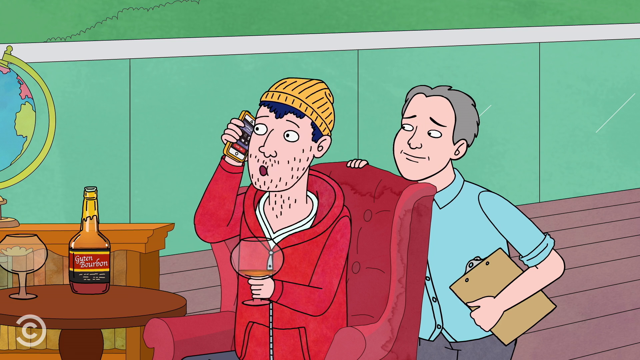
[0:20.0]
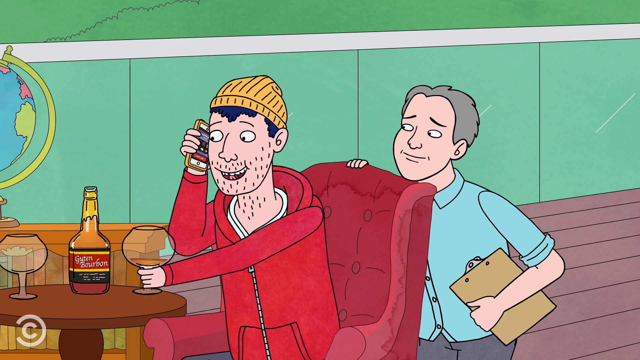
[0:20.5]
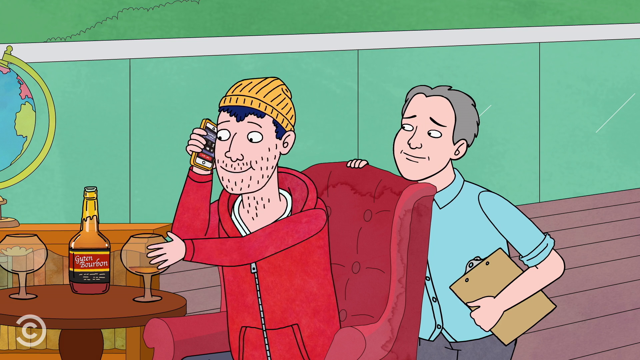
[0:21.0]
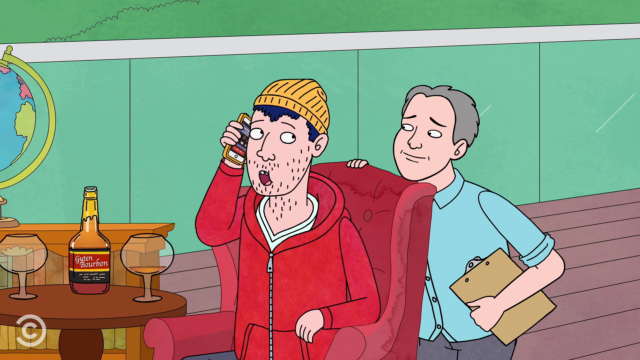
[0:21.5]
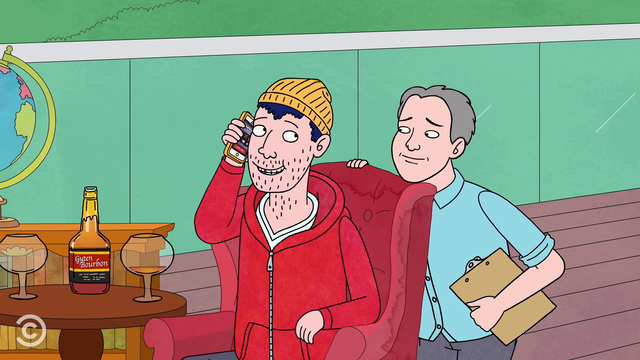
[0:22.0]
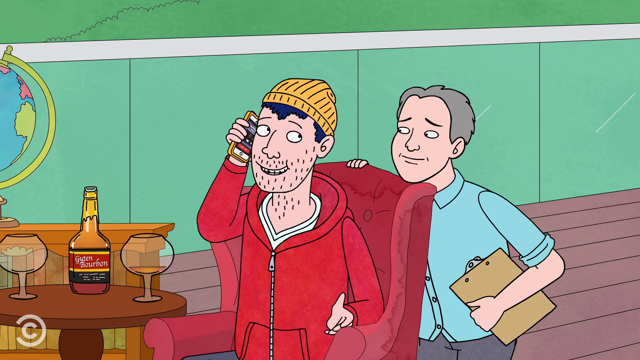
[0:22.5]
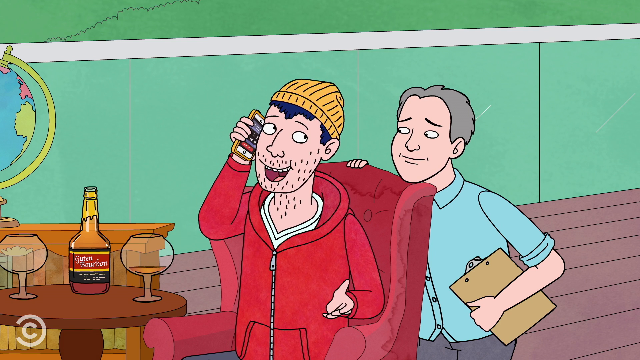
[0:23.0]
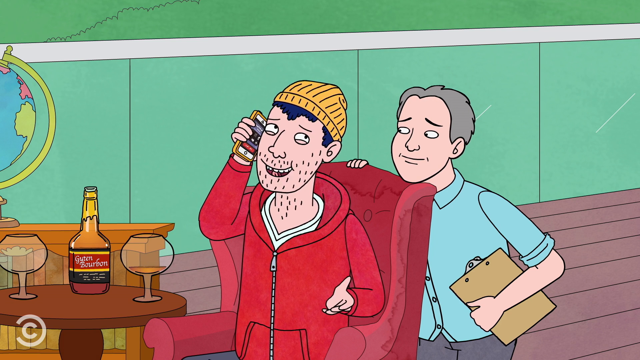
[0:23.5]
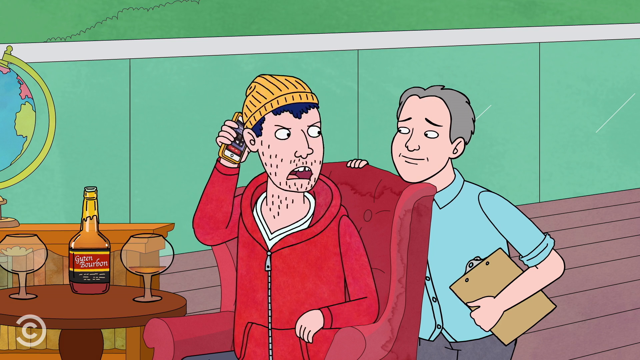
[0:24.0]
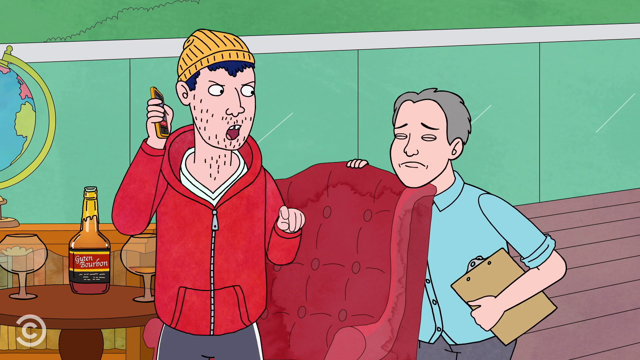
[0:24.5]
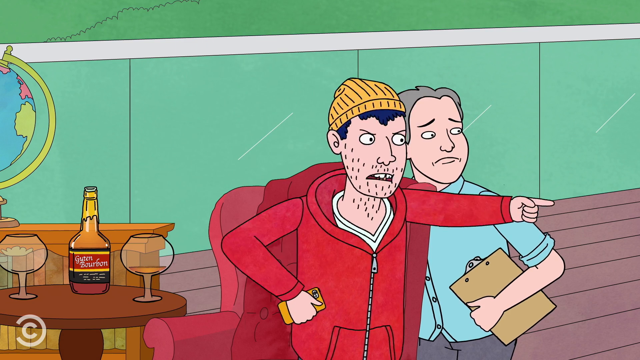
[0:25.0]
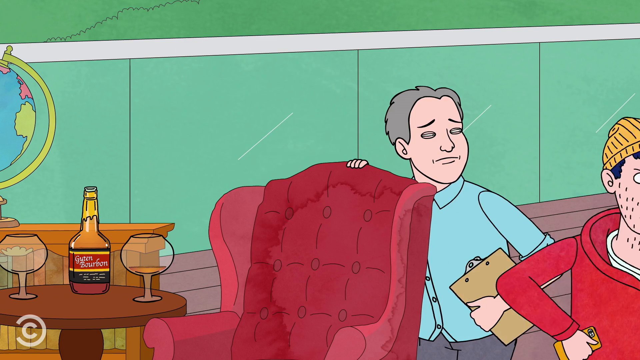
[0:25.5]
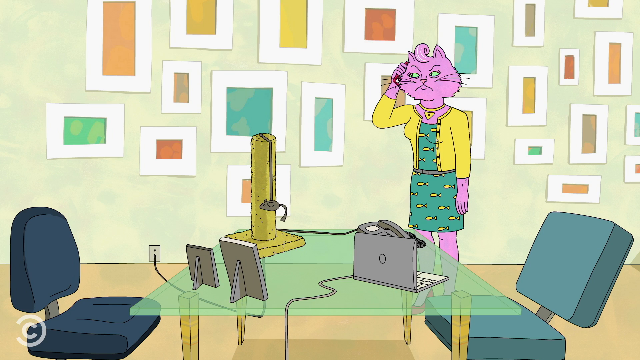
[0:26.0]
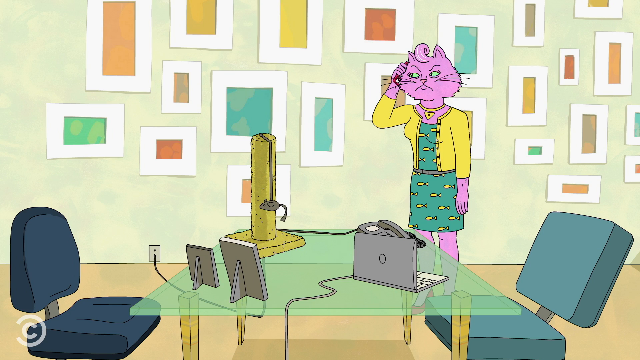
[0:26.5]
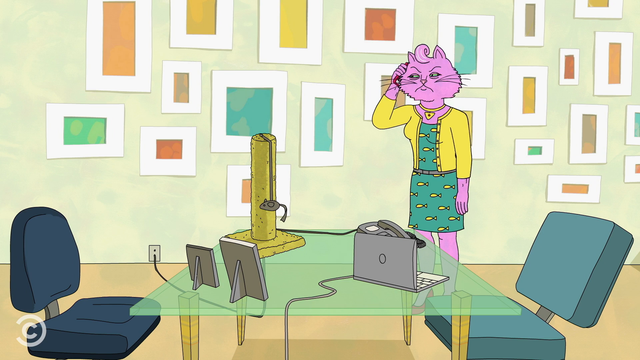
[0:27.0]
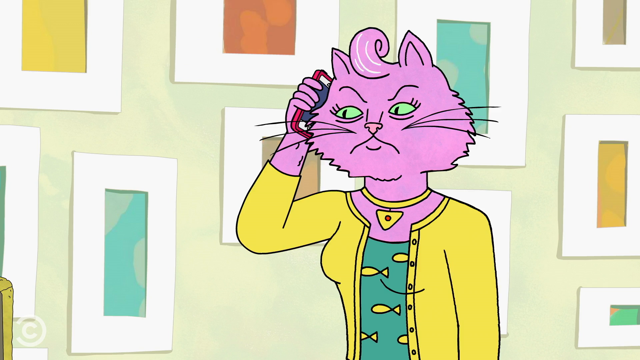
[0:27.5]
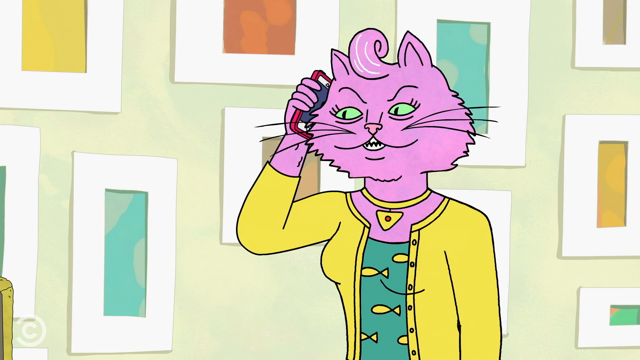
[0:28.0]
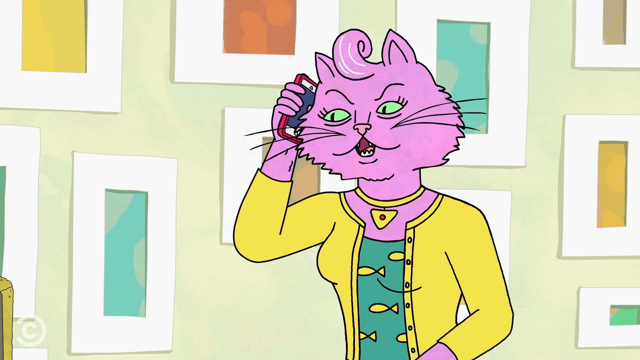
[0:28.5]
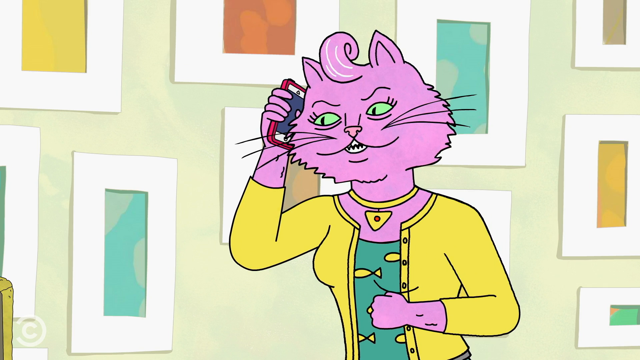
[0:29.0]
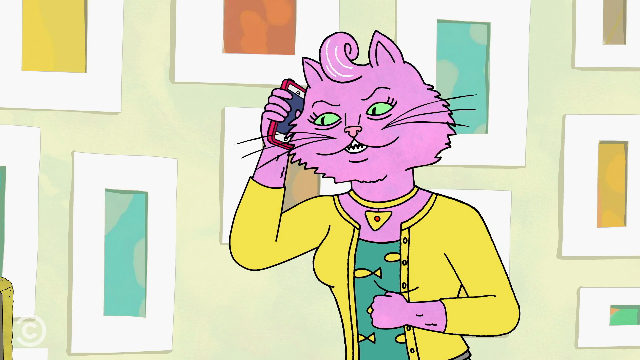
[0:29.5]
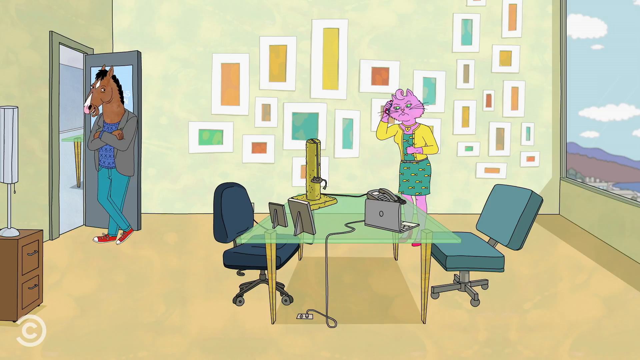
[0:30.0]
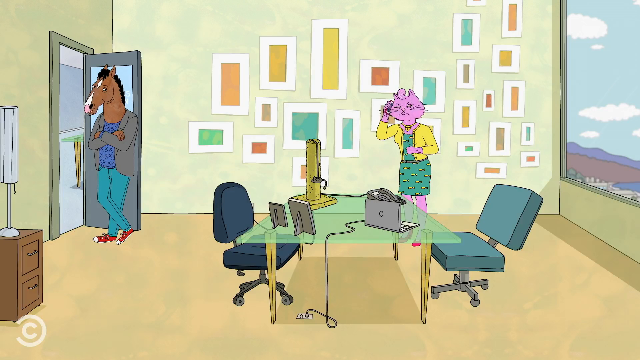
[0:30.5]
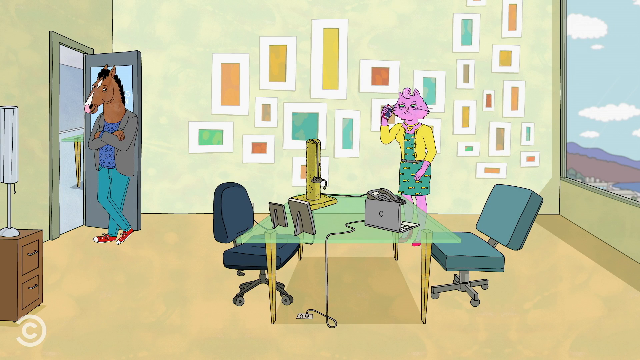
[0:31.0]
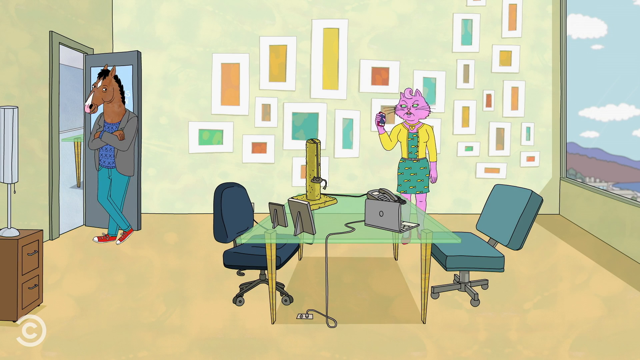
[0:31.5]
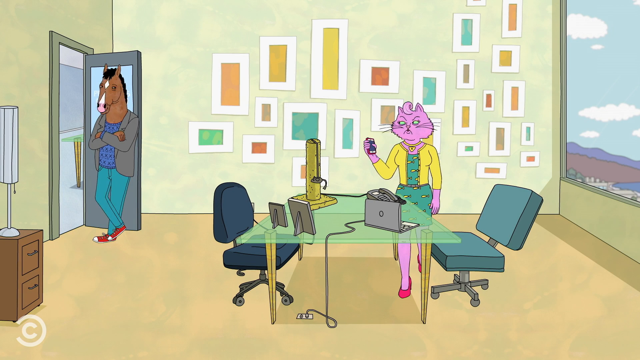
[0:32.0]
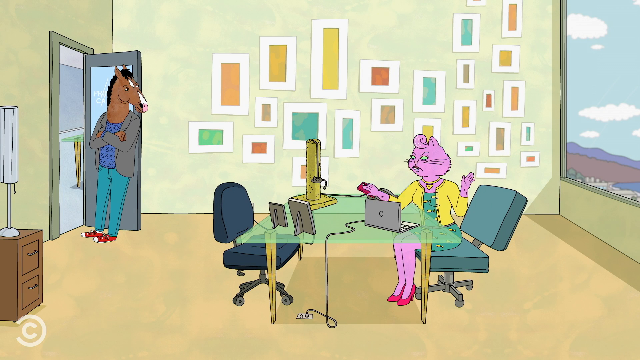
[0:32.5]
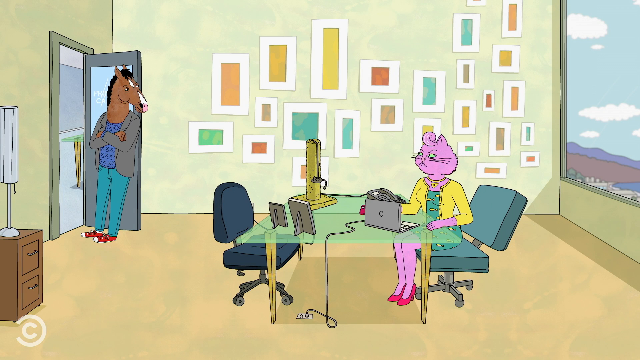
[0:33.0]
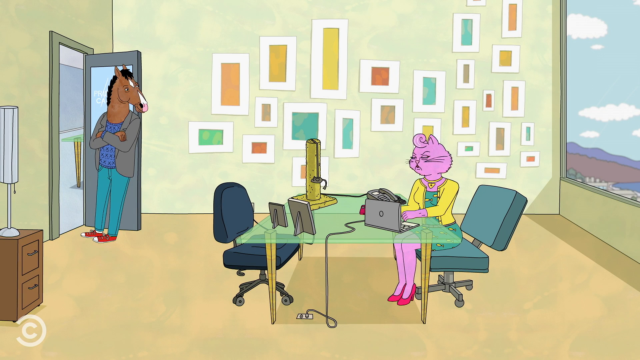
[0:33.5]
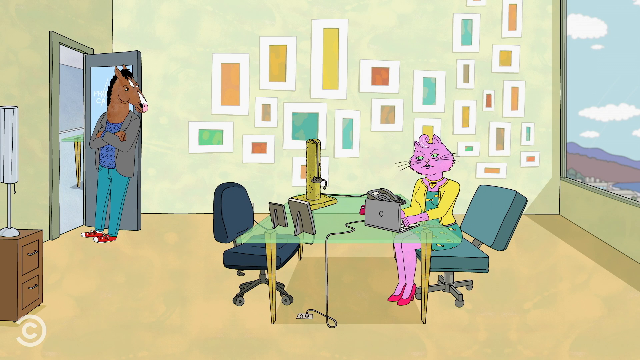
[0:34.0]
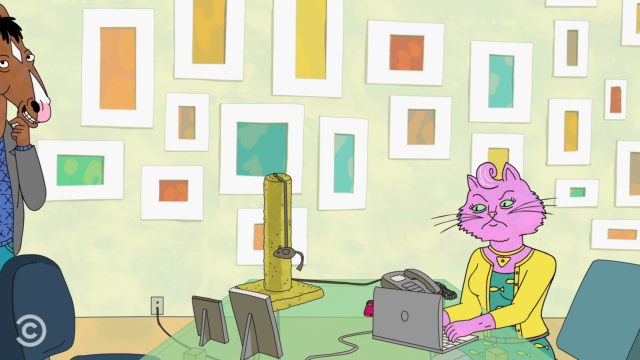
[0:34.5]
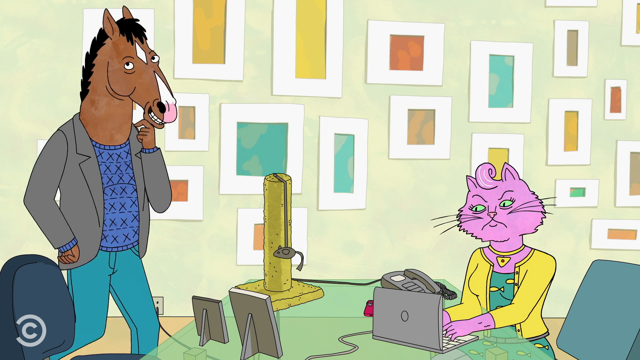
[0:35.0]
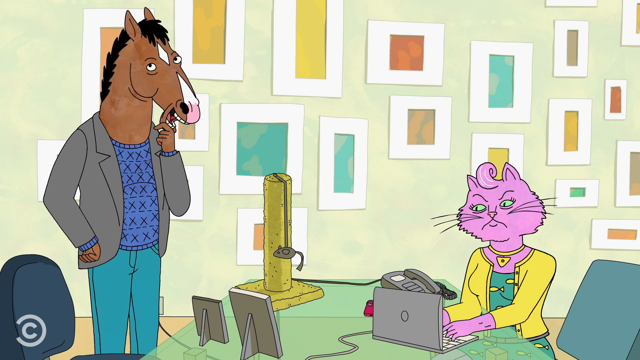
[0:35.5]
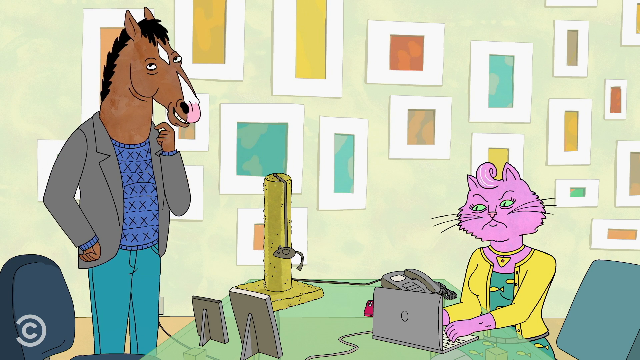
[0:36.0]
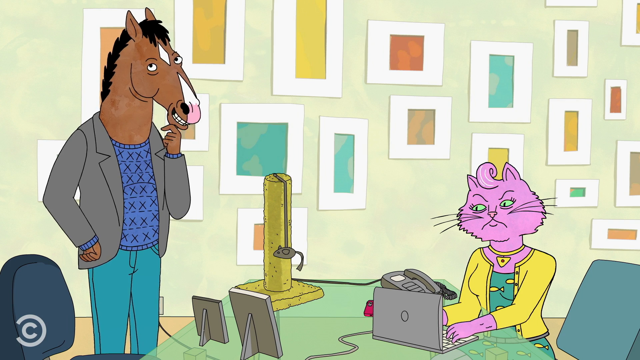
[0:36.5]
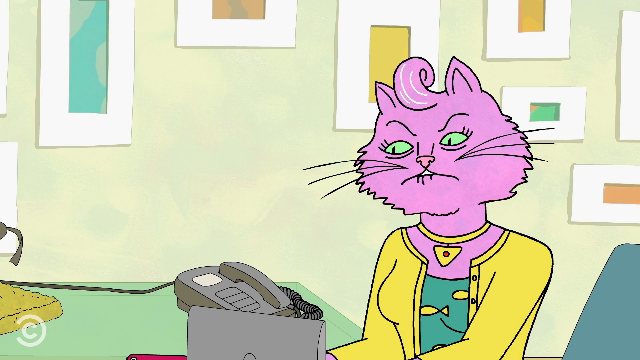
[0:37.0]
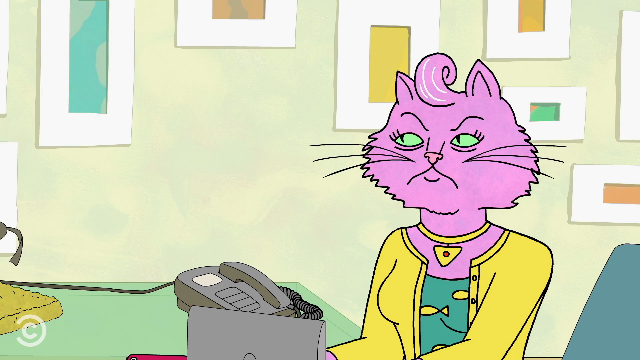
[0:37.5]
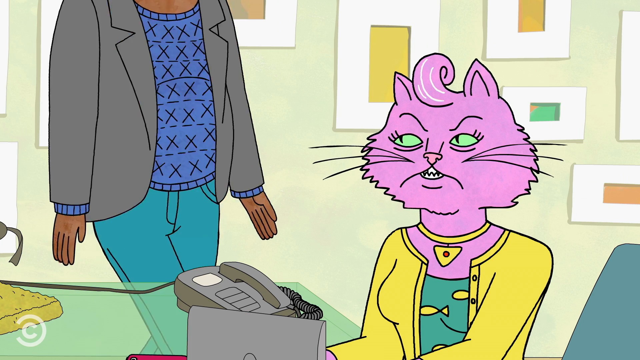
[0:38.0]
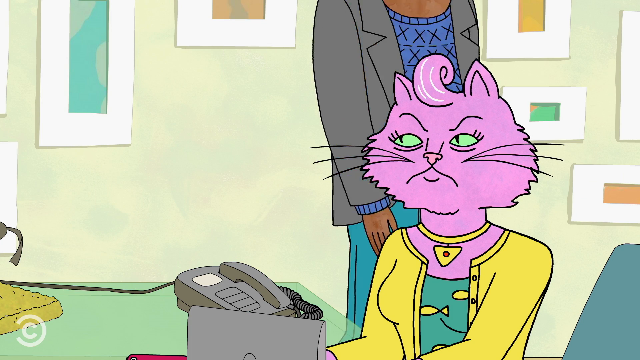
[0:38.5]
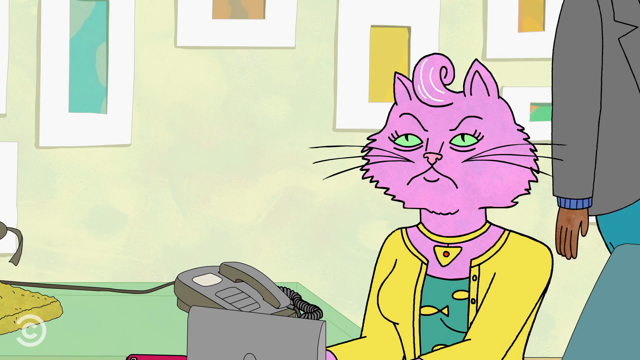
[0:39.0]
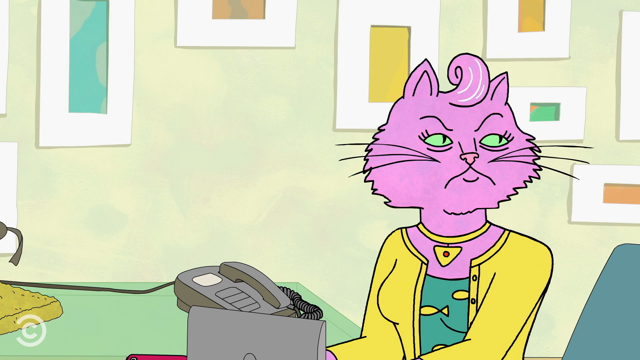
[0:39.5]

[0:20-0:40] In a close-up, the man sits in the red chair holding an empty brandy glass, on the phone and looking a little surprised. Behind him the man in the green shirt holds a clipboard; his torso and head are visible, but his right shoulder is hidden behind the chair, and his fingertips rest on the back of the chair. They are on a deck, with a wall of glass behind them and green foliage beyond it. On the left of the screen is a globe on top of a bookcase, and in front of the bookcase is a table with an empty brandy glass and a bottle of brandy to the right of the glass. The man places his glass onto the table, starts to look angry, turns his head to the right, stands up, raises his left hand pointing toward the left, and walks toward the left of the screen while the man behind the chair watches him leave. The scene cuts to the cat in an office, now showing more of the room: a glass table in the middle, a black swivel chair to its left and a green chair to its right. On the table are two photo frames, a large one and a small one, both facing the cat so their contents cannot be seen. To the right of them is an open laptop with a telephone in front of it, mostly obscured by the laptop screen. At the very end of the table is a cat scratching post with a mouse on it. The cat stands in front of a wall of photo frames of various shapes and sizes with different colours inside but no actual image. In a close-up, the cat is on the telephone, wearing a green dress with yellow fish, a yellow cardigan and a gold necklace, and she raises her right arm. A much wider view of the office reveals a horse standing at the open office door, propping it open. The corridor beyond has a table with a green top, a white floor and grey walls. On the very left of the screen is a brown filing cabinet with a white lamp on it. To the right is a massive window showing white clouds and, beneath them, what appears to be buildings. The cat walks to the table, sits down and starts typing on the laptop while talking to the horse. The horse appears at the end of the table looking thoughtful, bringing his hand up under his chin. They continue their conversation, then the horse walks off to the right. In a close-up of the cat, the horse walks behind her toward the window and she turns her head to the right to follow him.